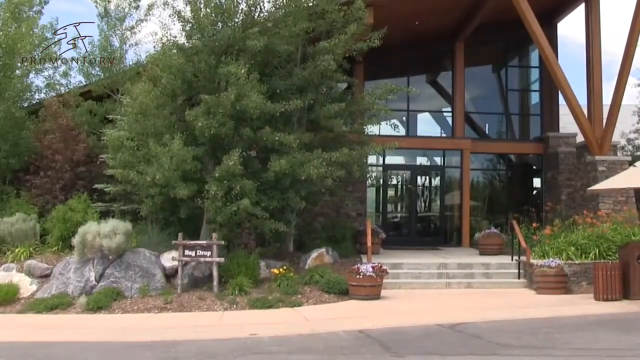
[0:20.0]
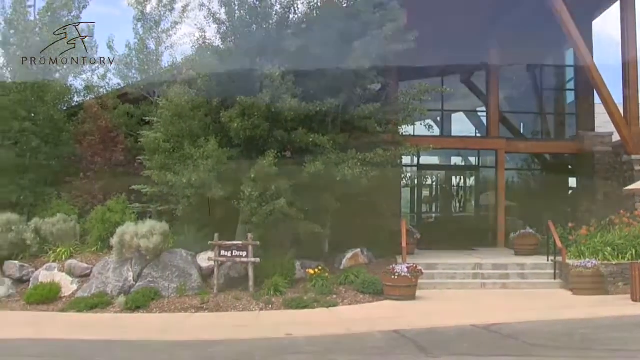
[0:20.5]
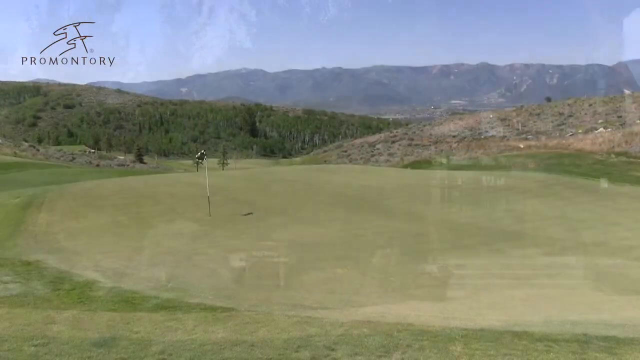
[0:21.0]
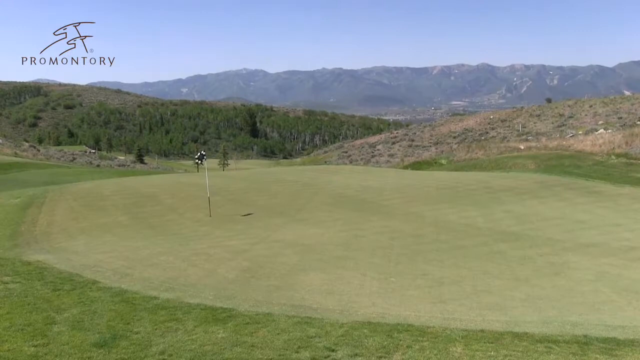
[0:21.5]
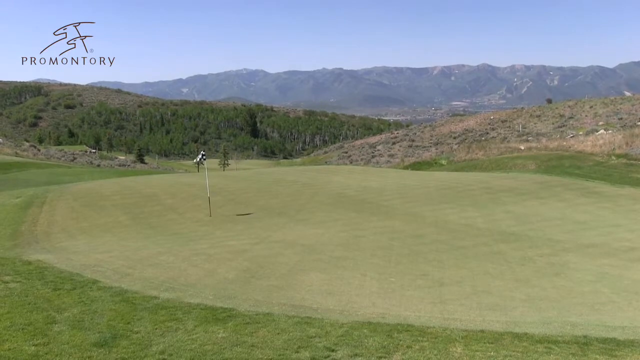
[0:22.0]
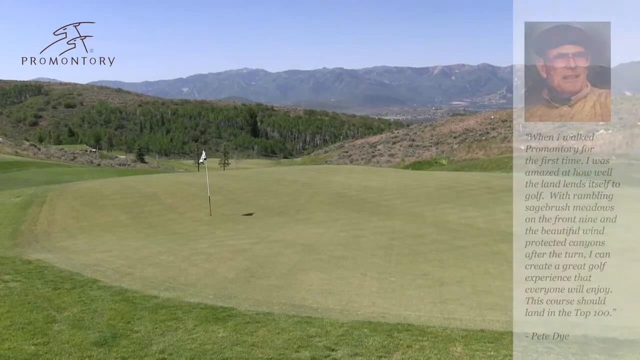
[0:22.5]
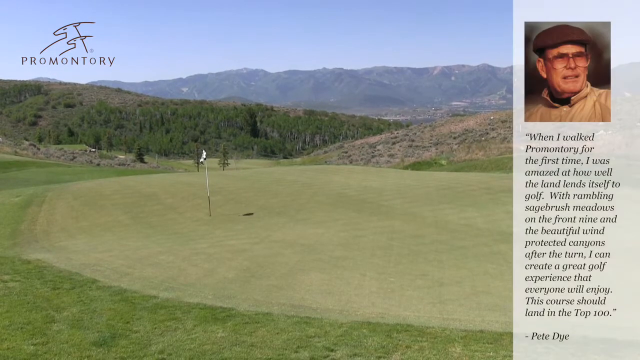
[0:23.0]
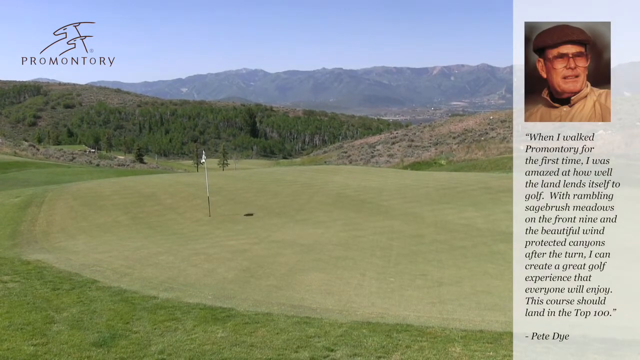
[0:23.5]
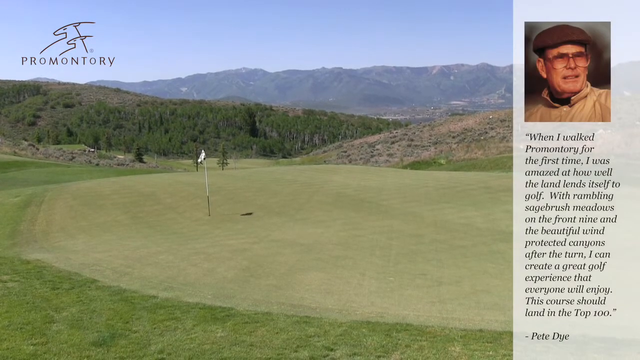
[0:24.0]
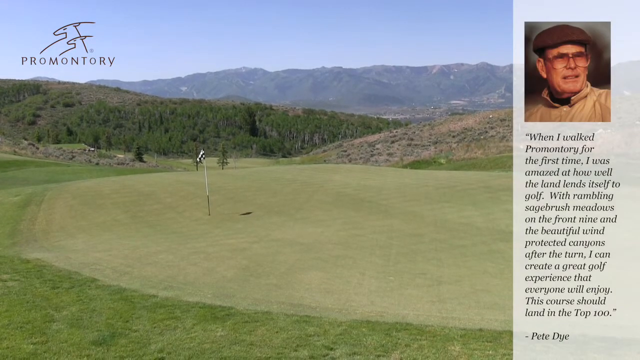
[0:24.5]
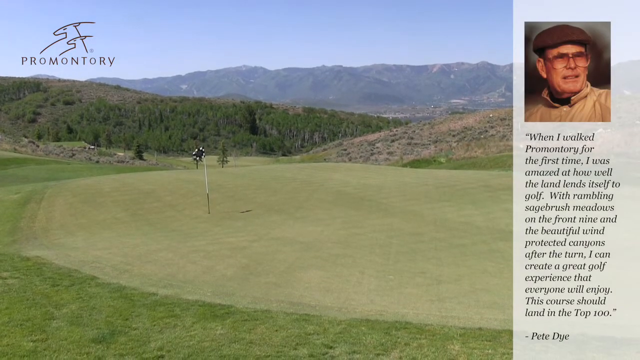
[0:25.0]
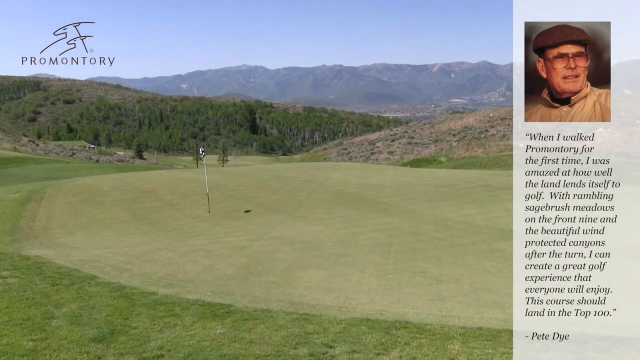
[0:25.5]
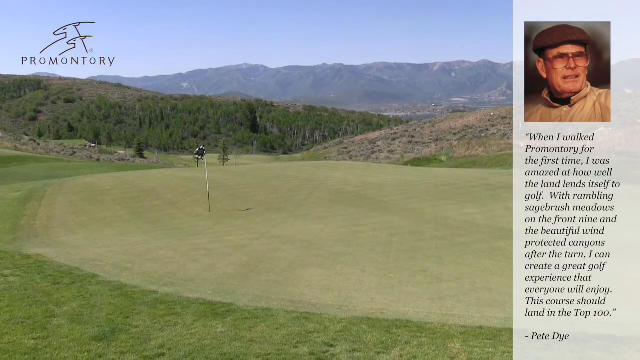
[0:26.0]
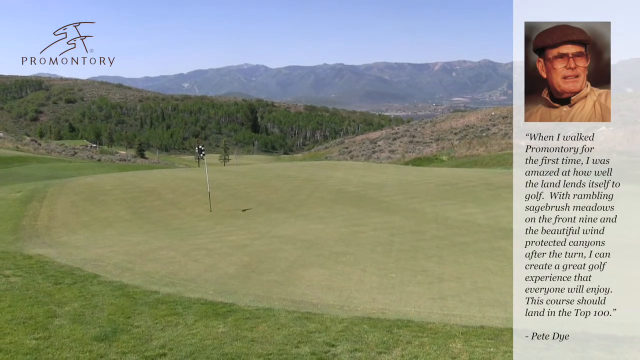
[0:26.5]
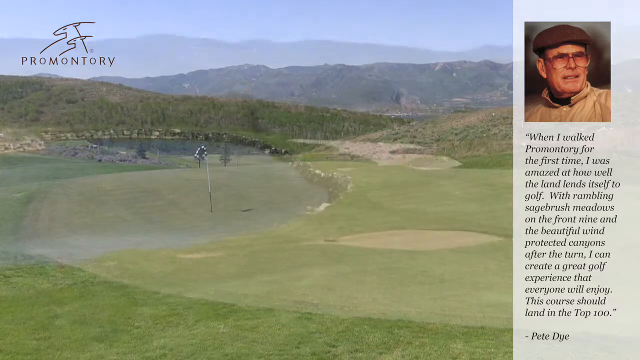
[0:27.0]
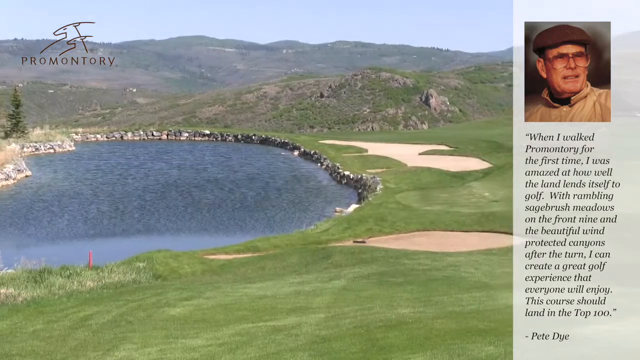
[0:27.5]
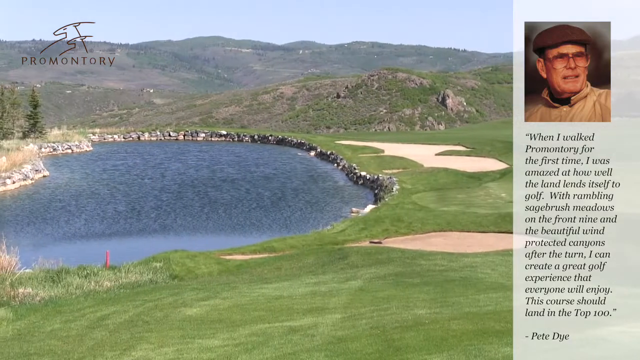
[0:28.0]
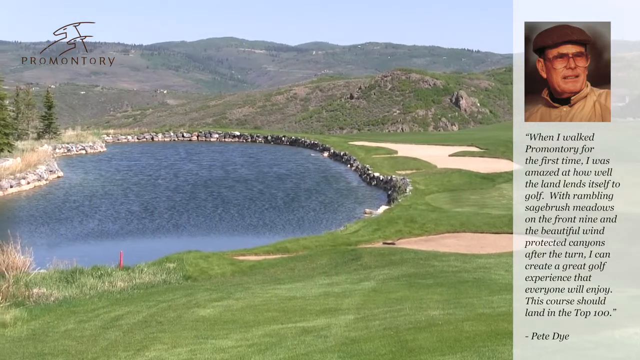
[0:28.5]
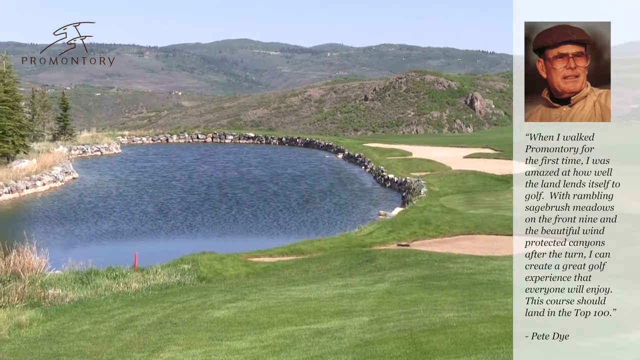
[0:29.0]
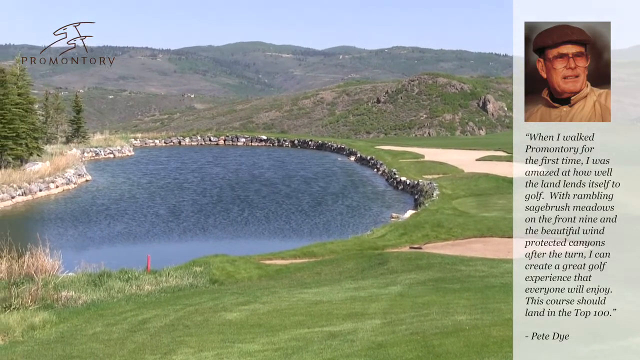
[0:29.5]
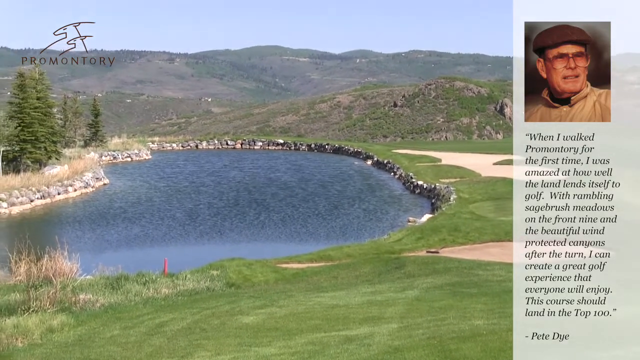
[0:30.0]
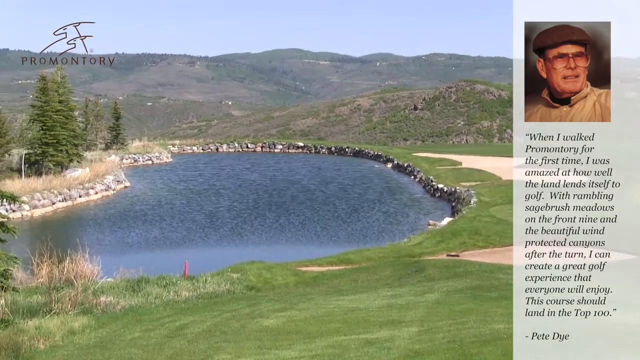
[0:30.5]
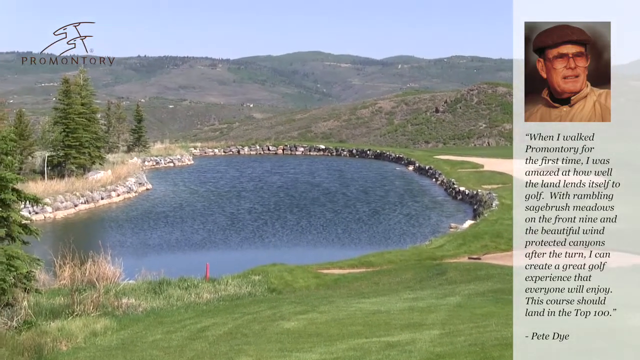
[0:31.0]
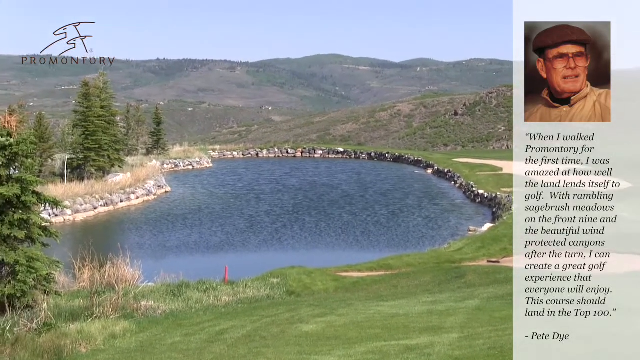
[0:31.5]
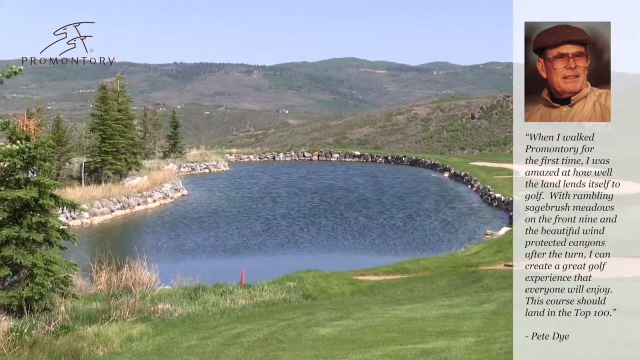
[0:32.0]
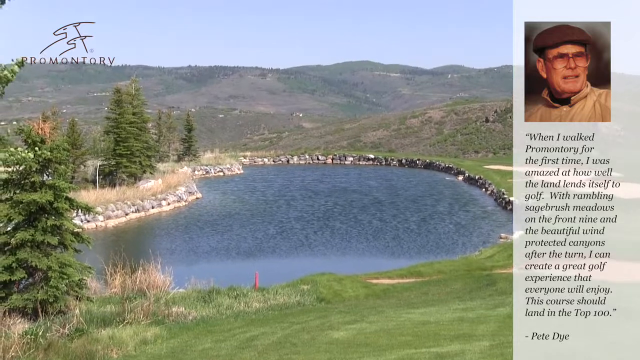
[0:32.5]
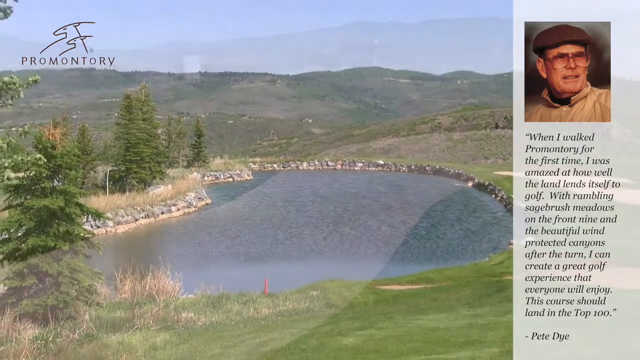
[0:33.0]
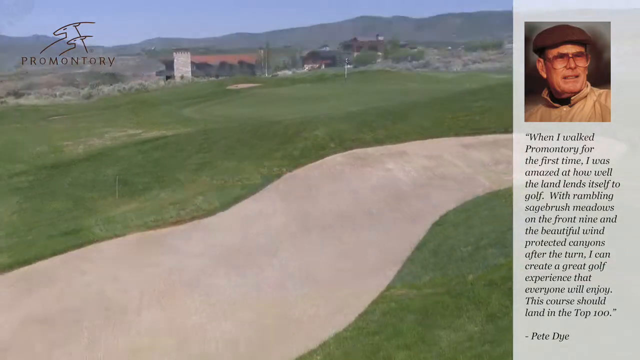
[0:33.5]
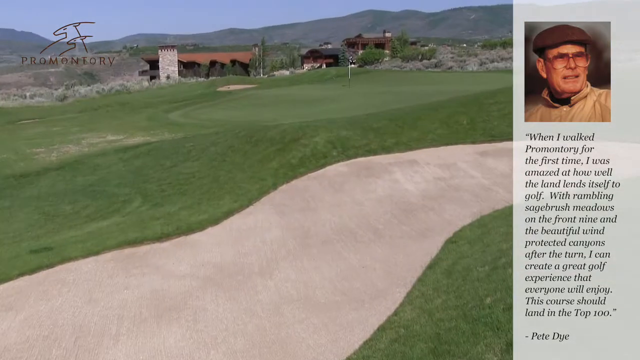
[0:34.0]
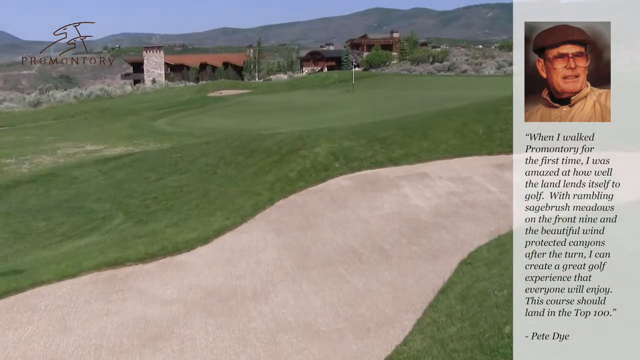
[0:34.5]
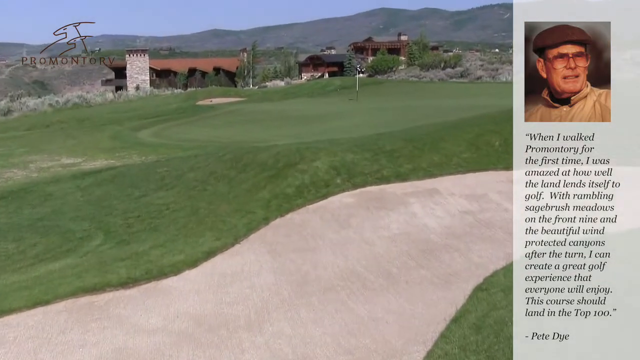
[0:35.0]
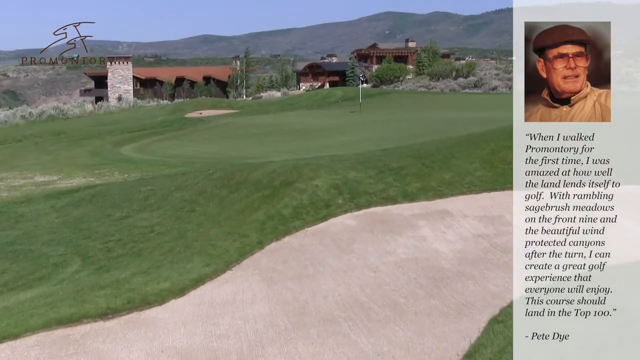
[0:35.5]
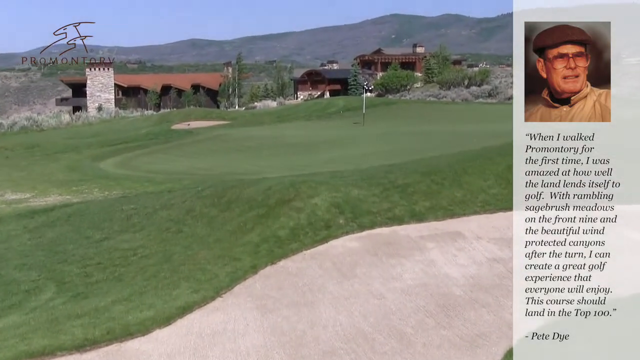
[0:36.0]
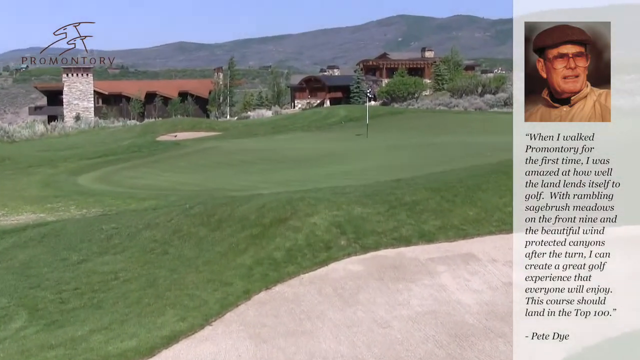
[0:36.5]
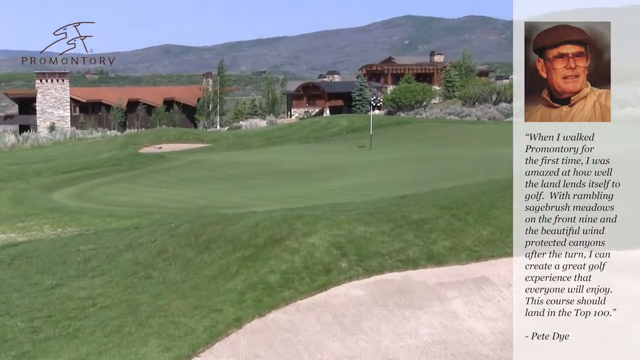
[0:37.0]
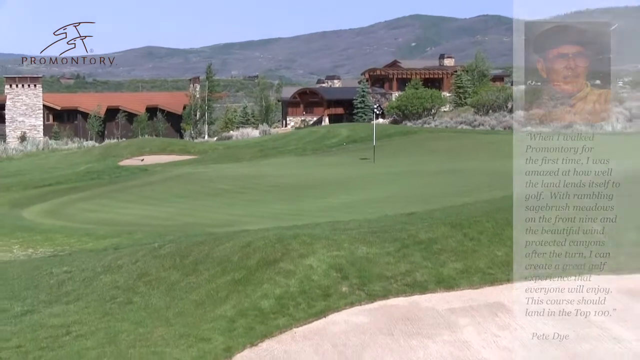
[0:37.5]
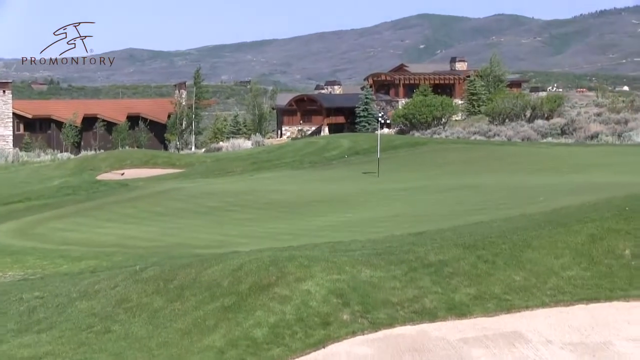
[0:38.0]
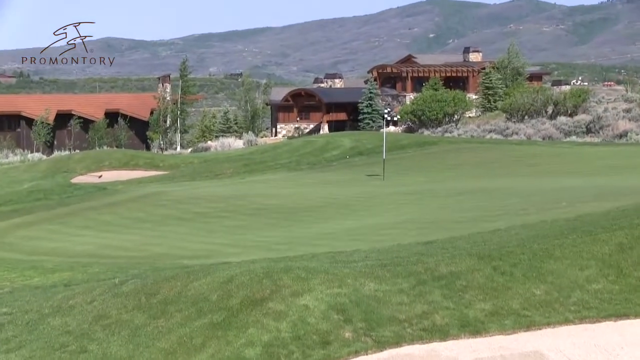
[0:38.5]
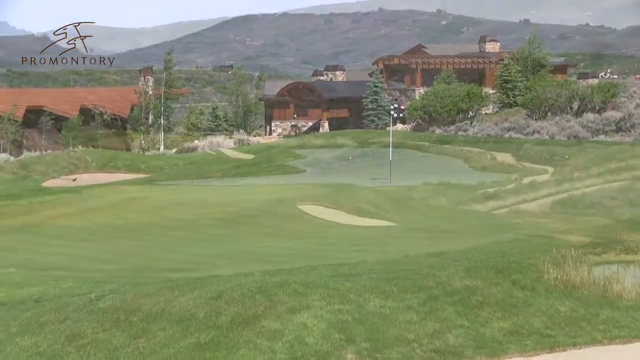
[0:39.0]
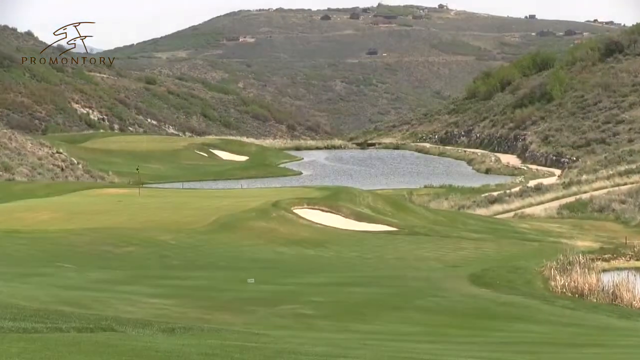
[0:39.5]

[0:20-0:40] The building where the golf club is located appears, surrounded by green trees, with a large glass wall facing the parking lot. There is a garbage can, railings near the steps, decorative stones and different types of foliage around it, a rustic sign that says "bag drop", and a wooden barrel full of flowers. It looks to be a summer day. The view pans to a golf course with a flag near a hole on the green. On the right side appears a man named Pete Dye in glasses and a golf cap, with text that says: "When I first walked Promontory for the first time, I was amazed at how well the land lends itself to golf. With the rambling sagebrush meadows on the front nine and the beautiful wind-protected canyons, I can create a great golf experience that everyone will enjoy. This, of course, should be in the top 100." The camera pans over the golf course to a large pond surrounded on the left by pines, with decorative rocks all around the pond. Sand pits and mountains are in the background, and the branches of the trees blow in the wind. The view then pans to another angle of the golf course, with the building in the background, more golf flags blowing, and more sand pits.